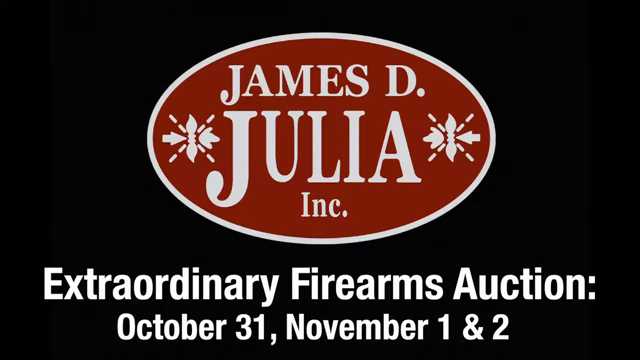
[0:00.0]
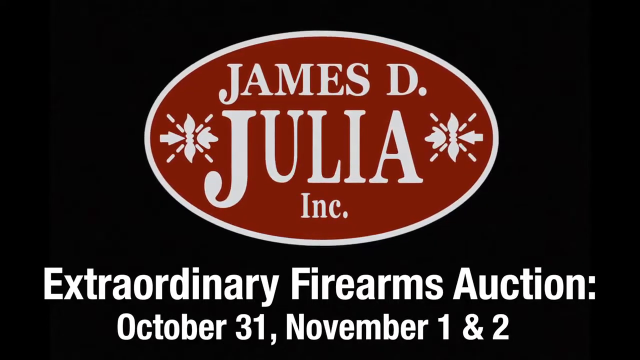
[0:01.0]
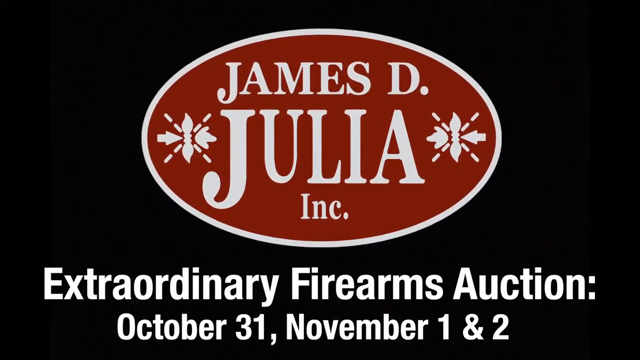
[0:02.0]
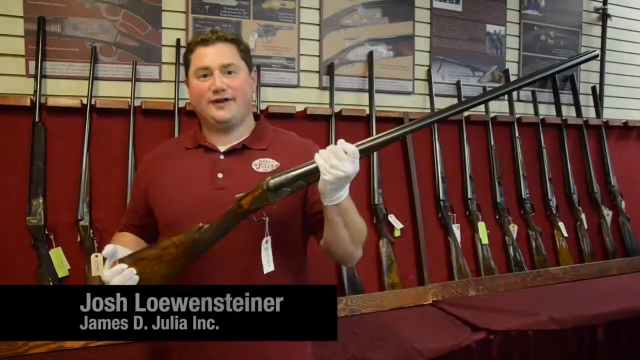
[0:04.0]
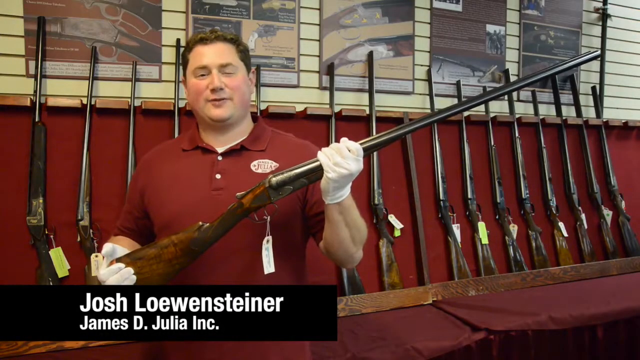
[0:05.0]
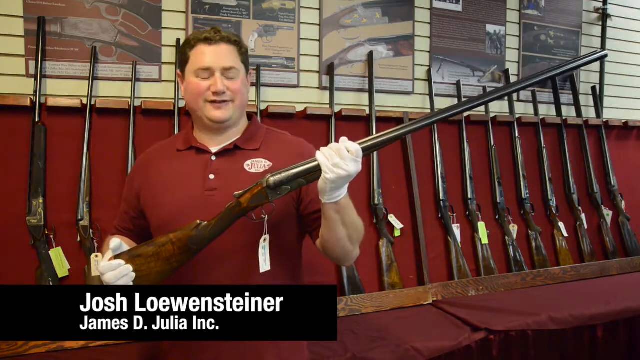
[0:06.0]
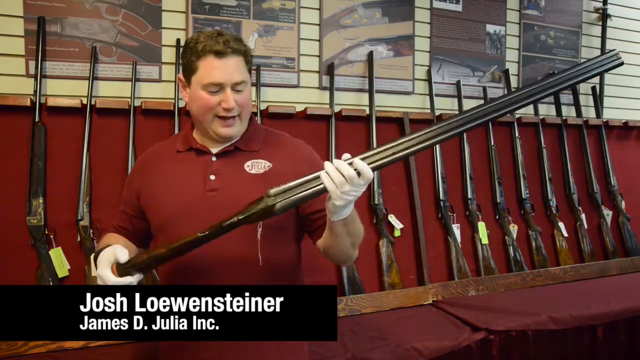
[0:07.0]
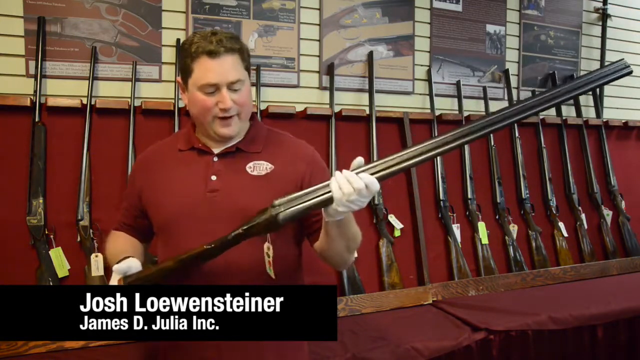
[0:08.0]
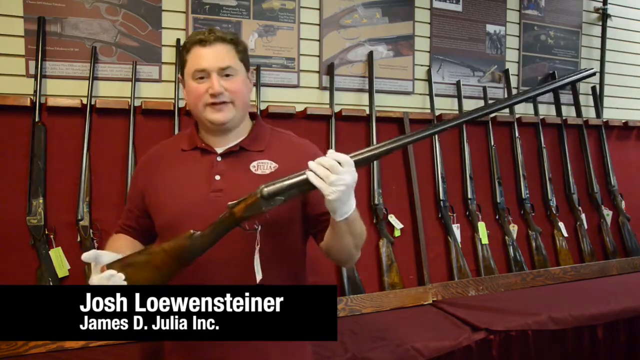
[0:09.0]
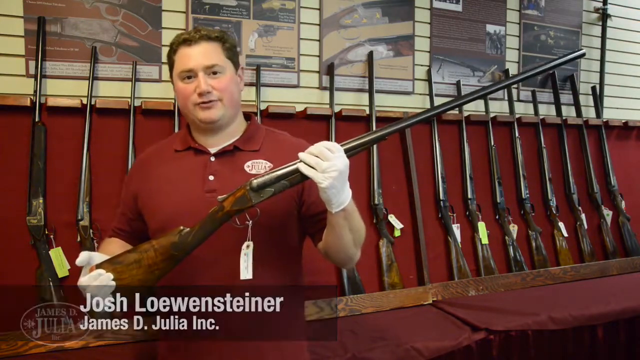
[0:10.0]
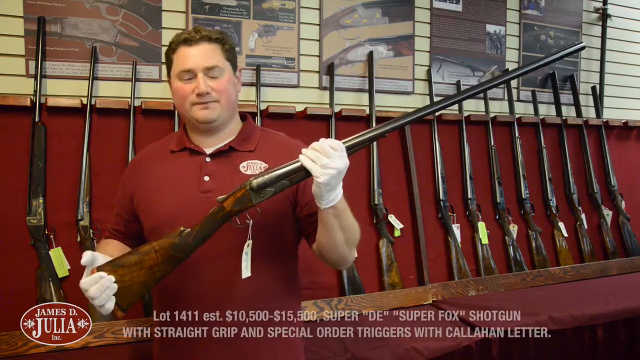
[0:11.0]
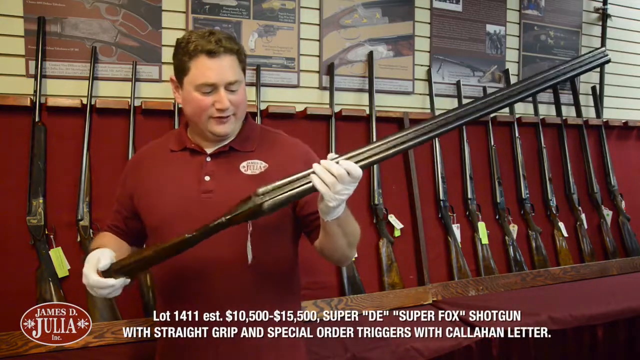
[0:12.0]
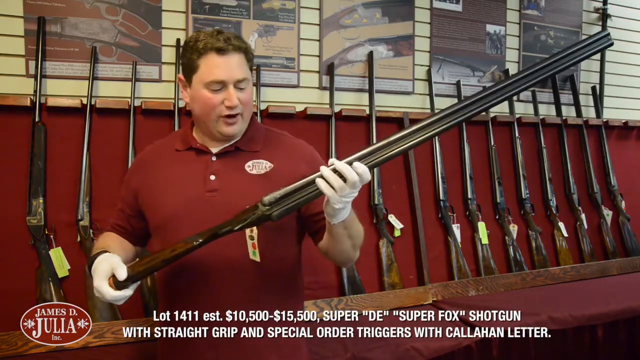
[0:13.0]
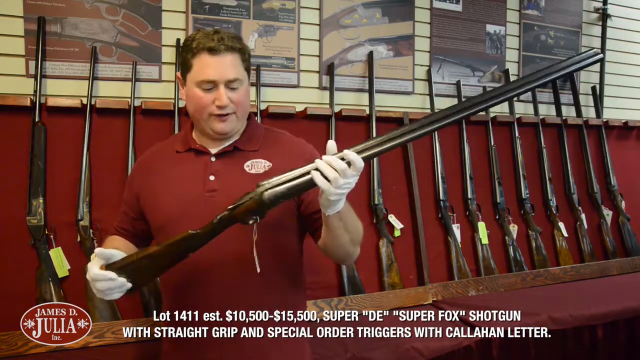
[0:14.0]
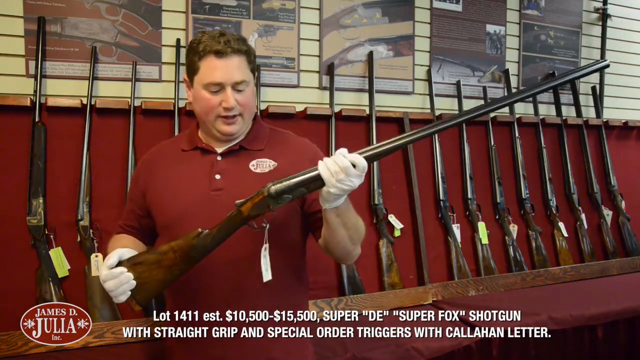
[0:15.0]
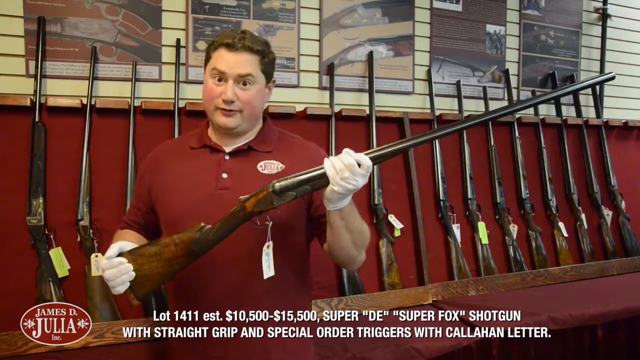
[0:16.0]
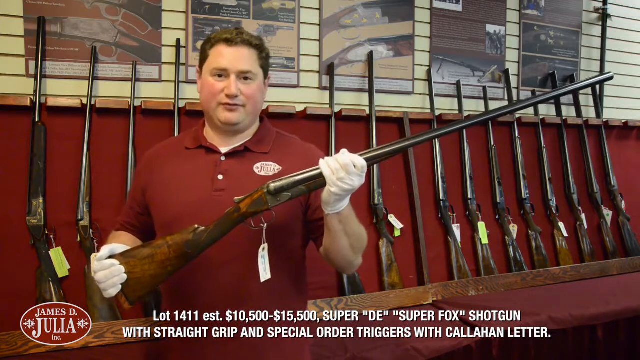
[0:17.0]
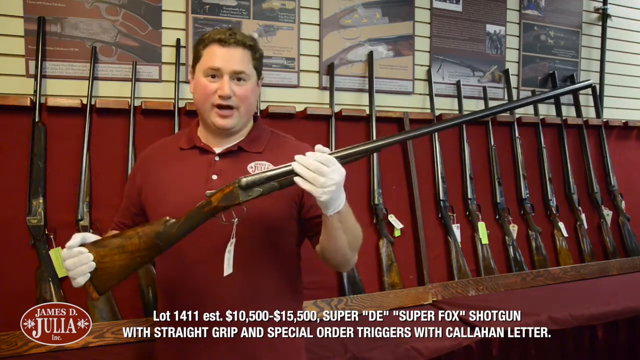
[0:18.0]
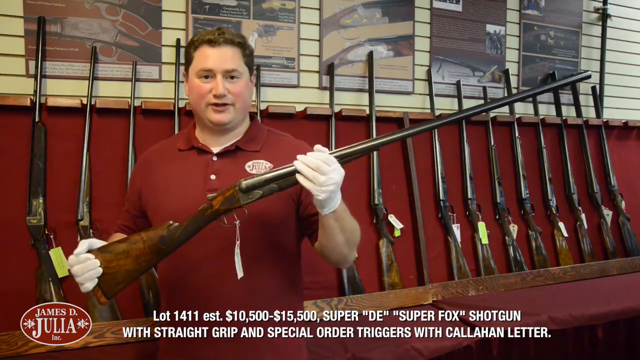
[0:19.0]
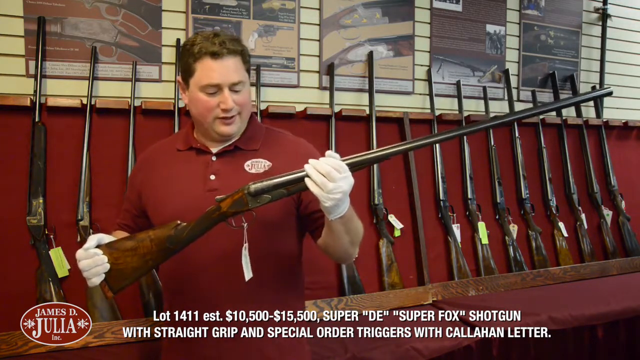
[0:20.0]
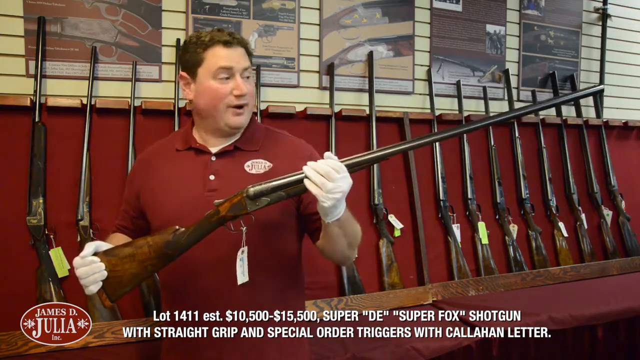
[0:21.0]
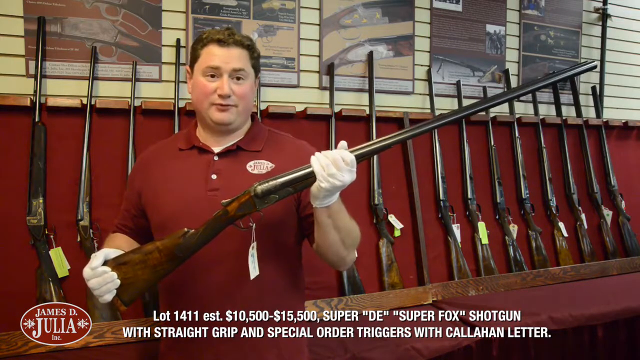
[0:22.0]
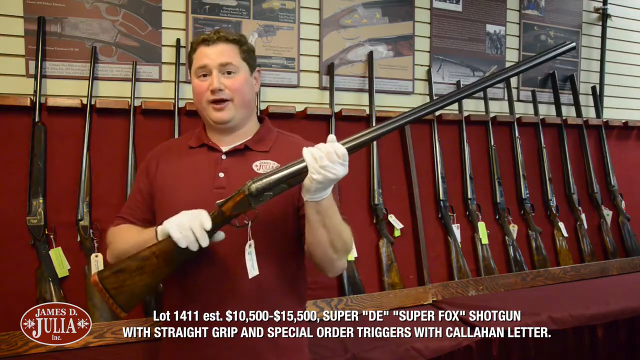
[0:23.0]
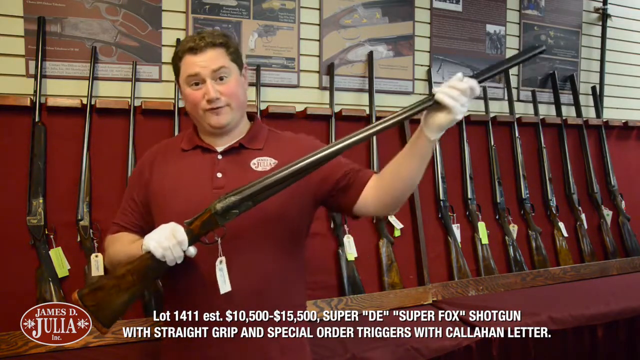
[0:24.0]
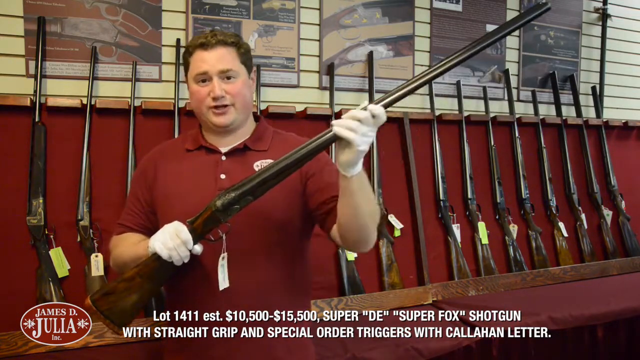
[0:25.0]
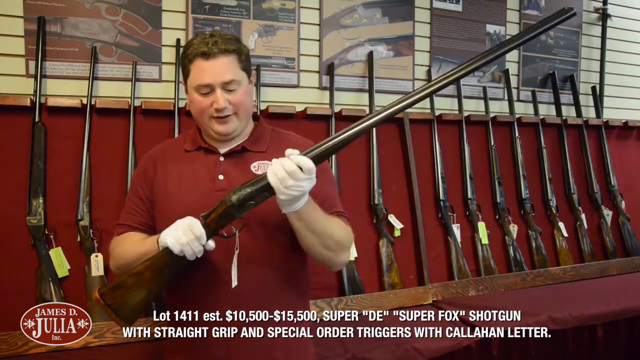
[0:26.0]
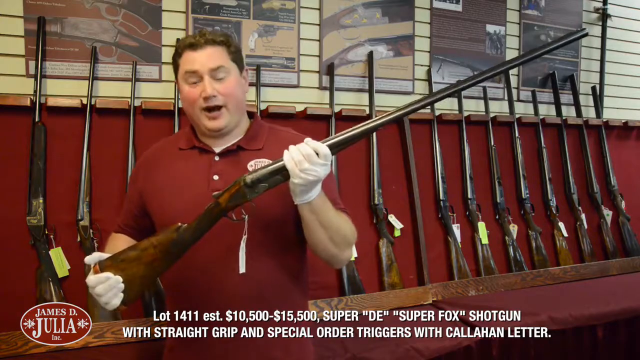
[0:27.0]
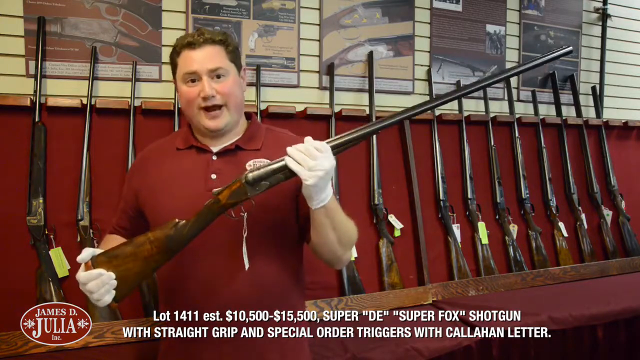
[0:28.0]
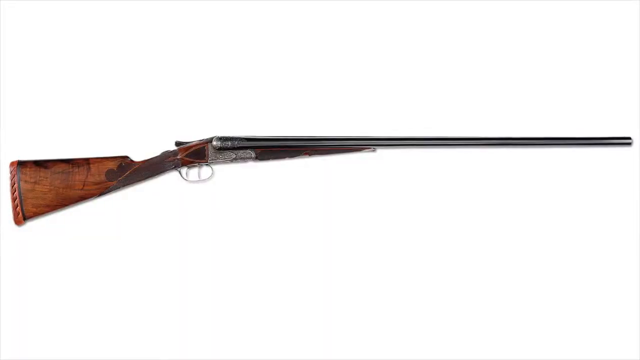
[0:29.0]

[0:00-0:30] A title card with a black background reads "James D. Julia, Inc." Beneath it is the text "Extraordinary Firearms Auction, October 31st, November 1st, and 2nd." The scene then transitions to a man holding a long-barreled rifle, which extends from his right to his left, or left to right from the viewer's side. He wears gloves and a red shirt, and behind him is a wall of rifles. A name card at the bottom reads "Josh Lowenwensteiner," and the text at the bottom also indicates that he works at James D. Julia Inc. He speaks directly to the camera, then looks down at the rifle and seems to be discussing it. He turns the rifle over so it is lying on its side in his hands and keeps speaking, probably describing it in detail. He then turns it upright again and then moves it onto its side one more time.